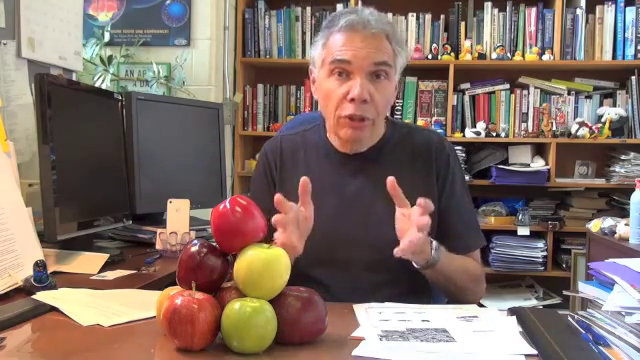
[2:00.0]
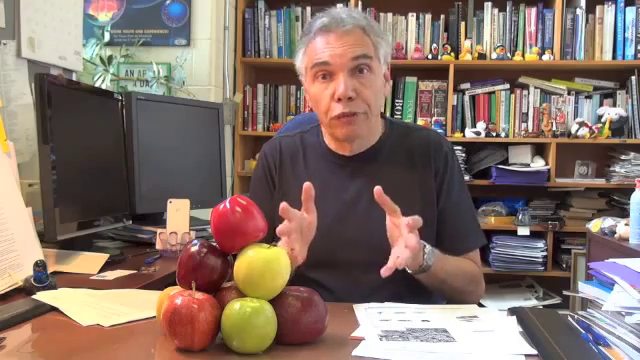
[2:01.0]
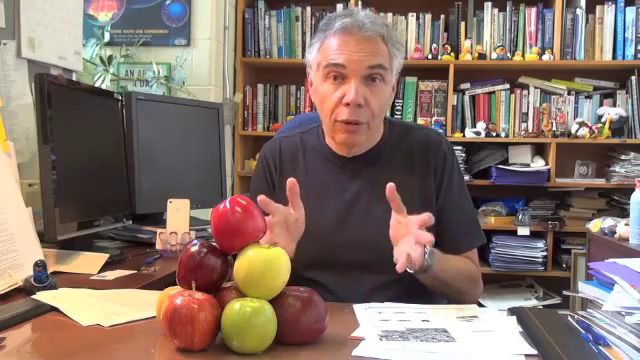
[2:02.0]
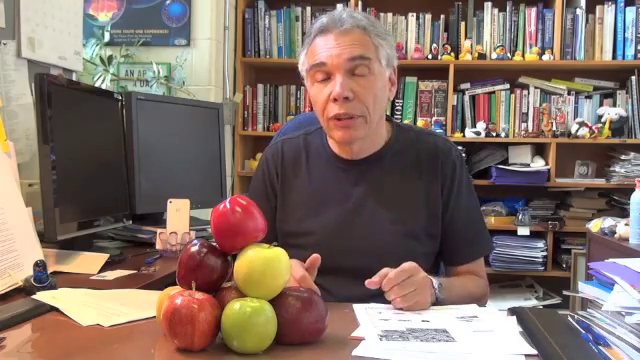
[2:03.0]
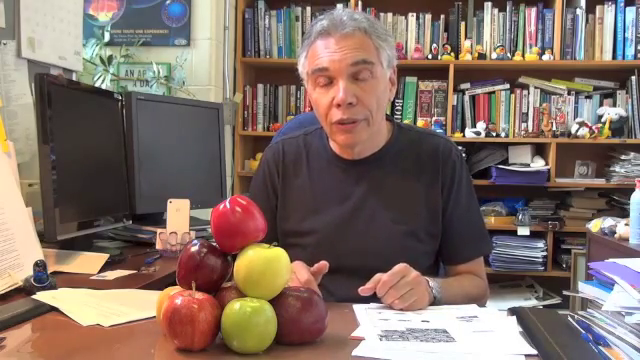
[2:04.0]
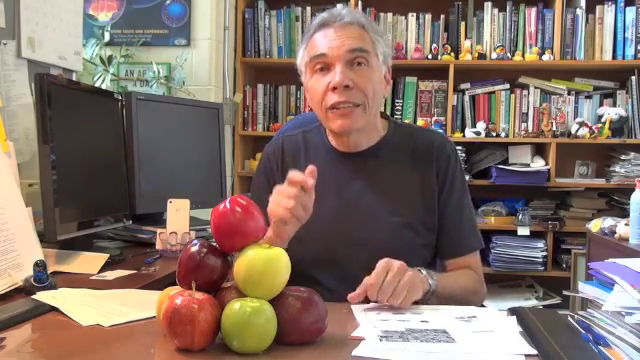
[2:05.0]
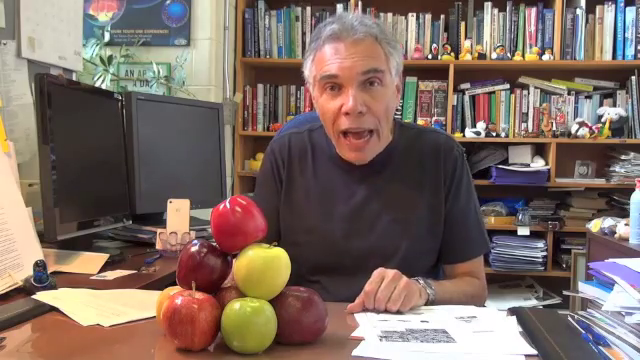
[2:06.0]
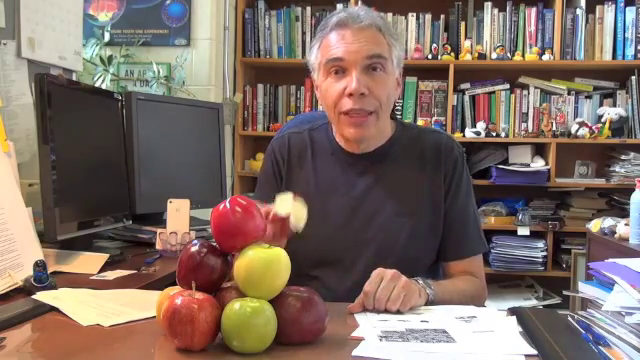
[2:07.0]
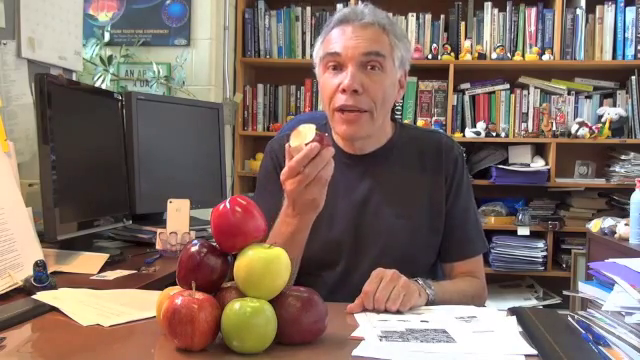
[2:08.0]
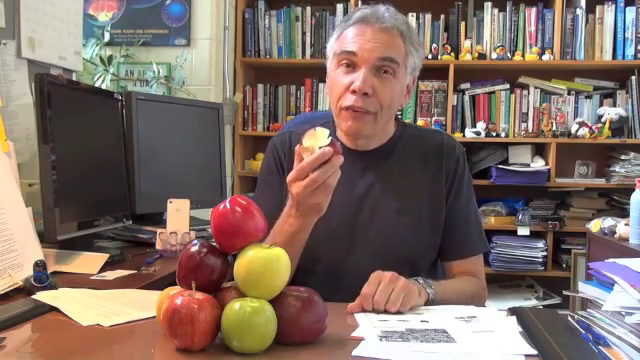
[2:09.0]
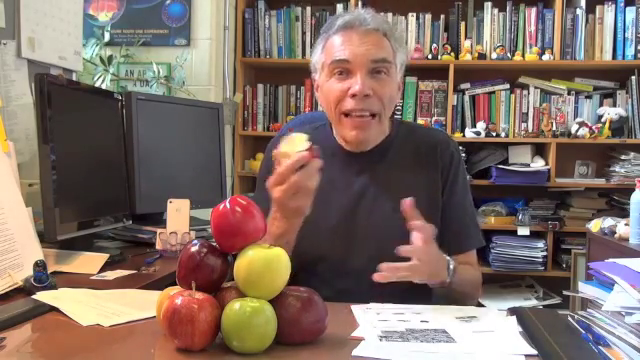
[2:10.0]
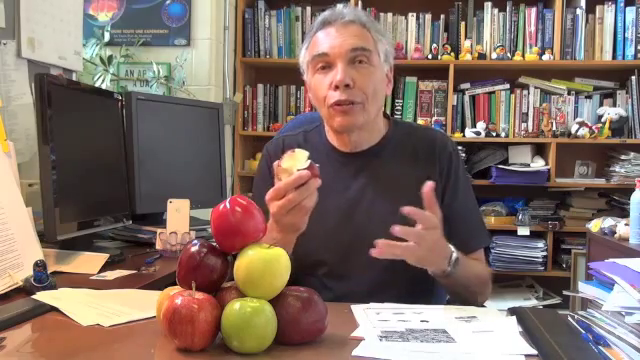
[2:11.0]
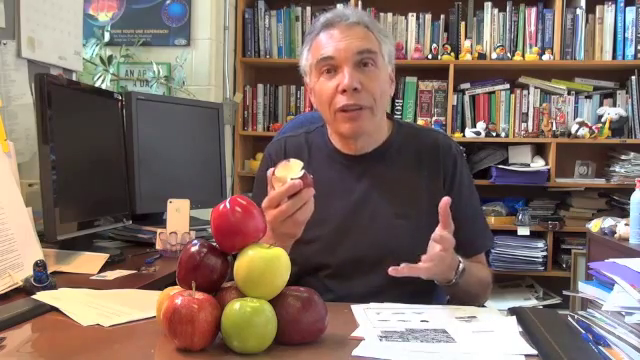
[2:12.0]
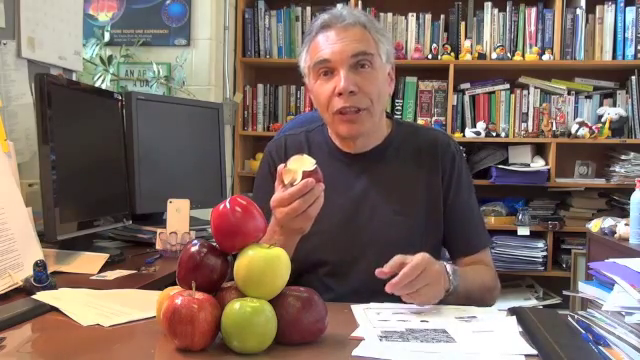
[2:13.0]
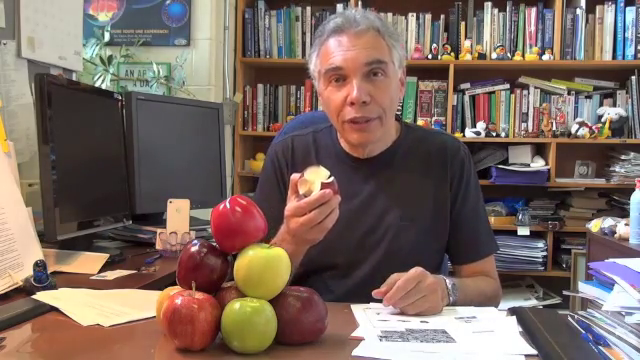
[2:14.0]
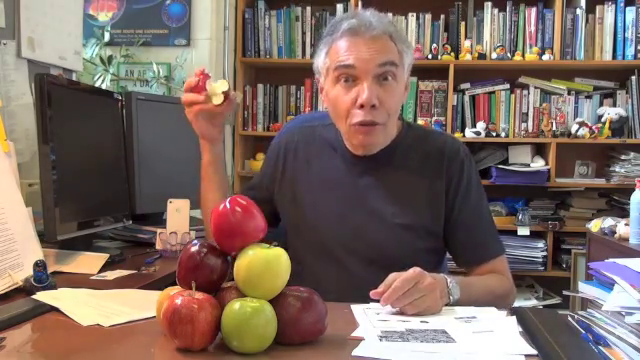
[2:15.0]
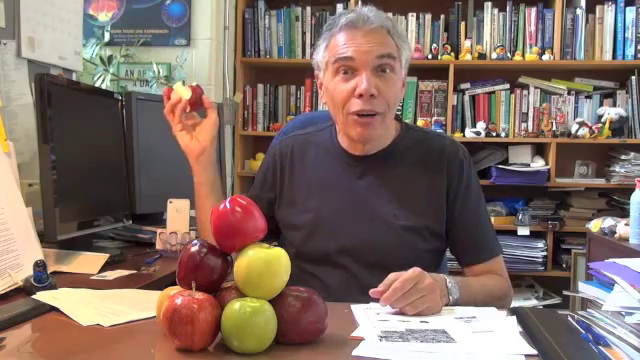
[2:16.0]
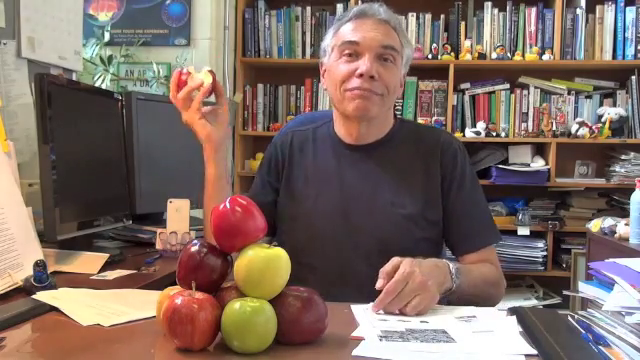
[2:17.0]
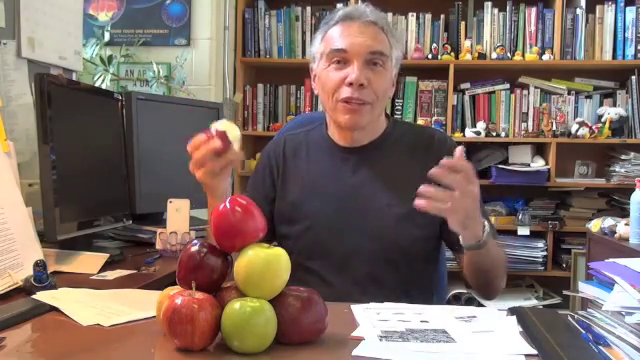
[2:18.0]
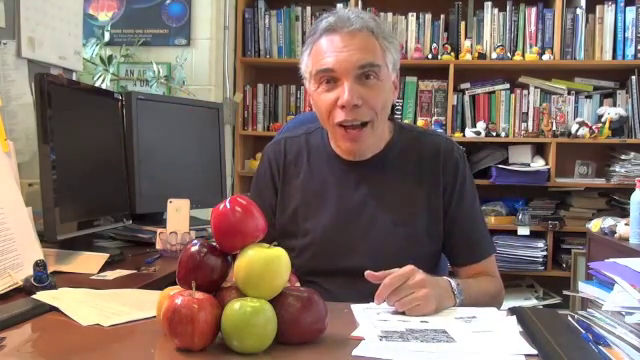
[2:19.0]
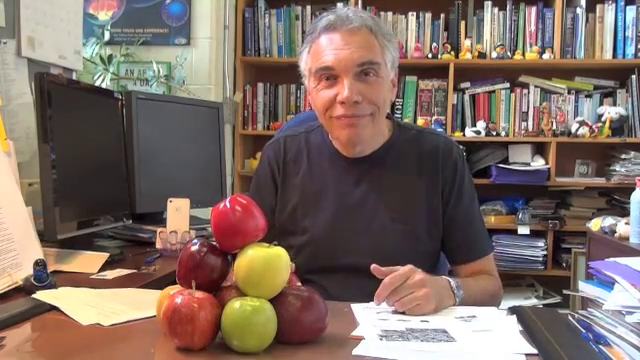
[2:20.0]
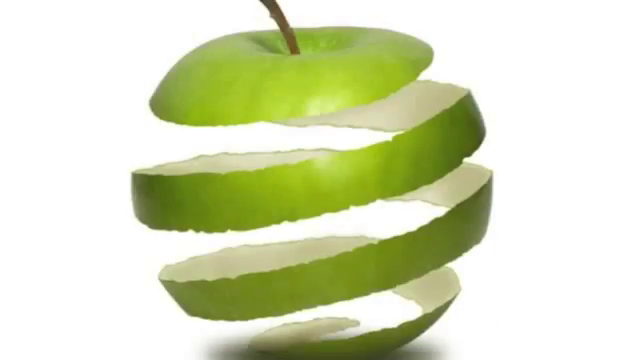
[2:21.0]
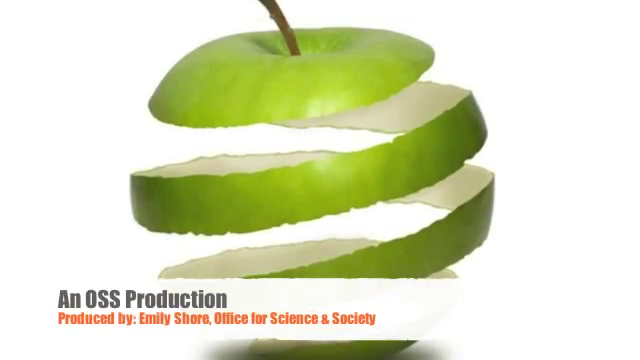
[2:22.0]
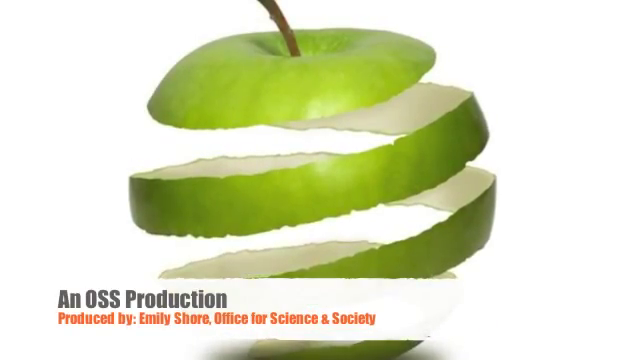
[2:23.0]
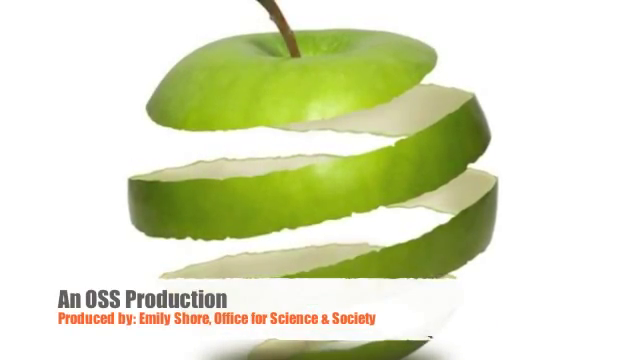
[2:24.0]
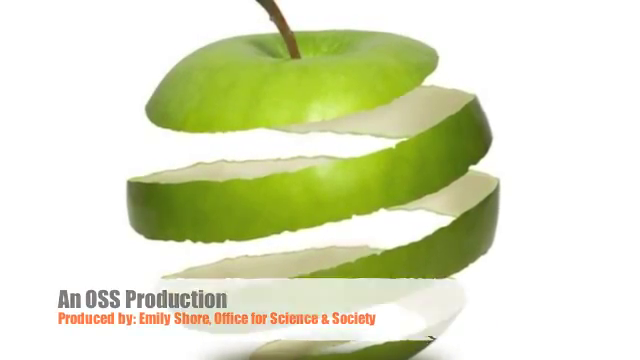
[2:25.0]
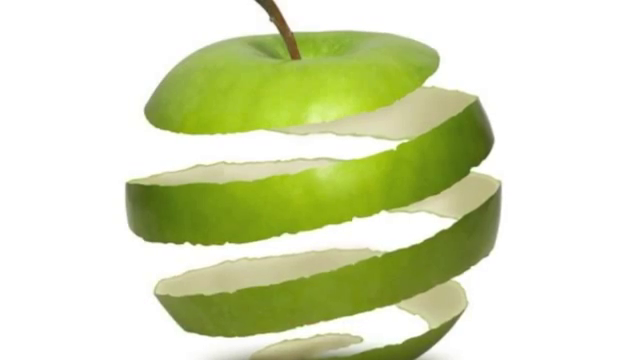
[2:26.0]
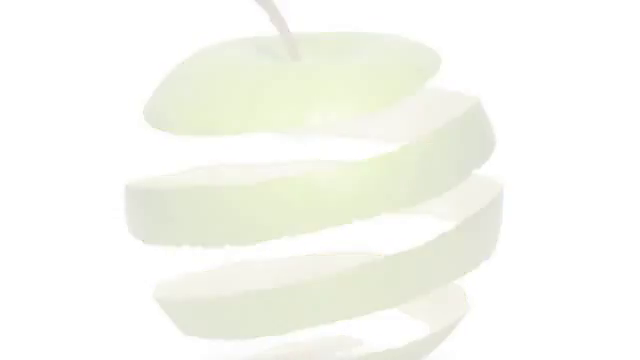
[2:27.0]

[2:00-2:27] A middle-aged man with gray hair, wearing a black t-shirt, sits at a desk talking to the camera. Two computer monitors are to his right, and behind him is a bookshelf laden with books, papers and other objects. On the desk in front of him are a few papers and a stack of apples of different varieties, some red, some green, some yellow. He talks for a while, motioning with his hands, then with his right hand picks up a partially eaten apple from behind the stack, with a path around it where bites have been taken out. He holds it while still talking to the camera. He then pulls his arm back as if he is going to throw the apple at the camera, but never does. The video ends on a stylized image of a spiraled green apple peel, just the peel, with production credits at the bottom of the screen reading "an OSS production".